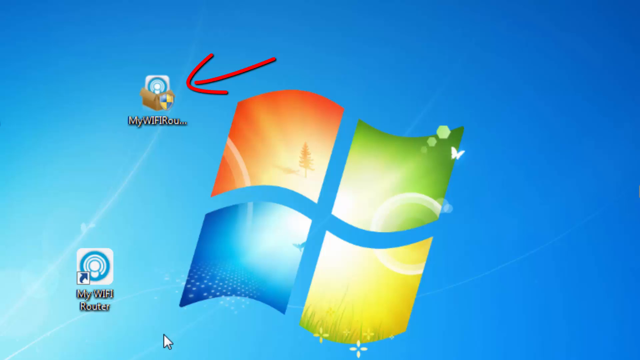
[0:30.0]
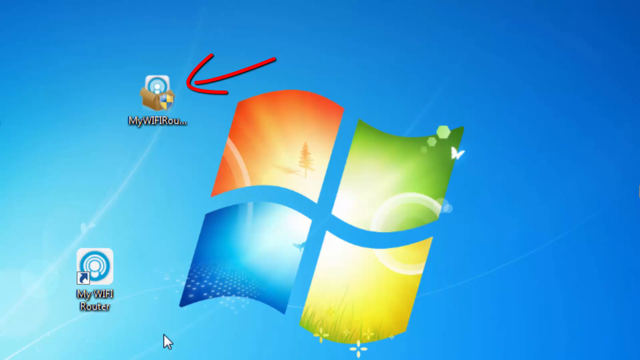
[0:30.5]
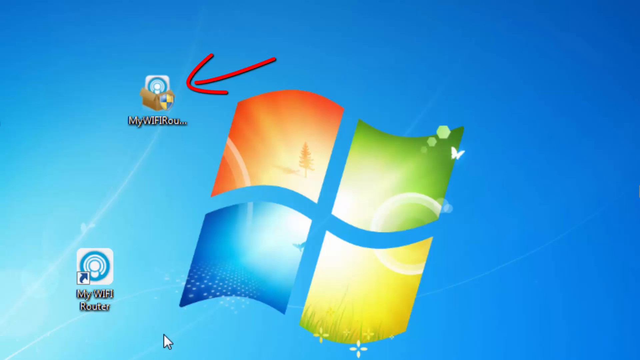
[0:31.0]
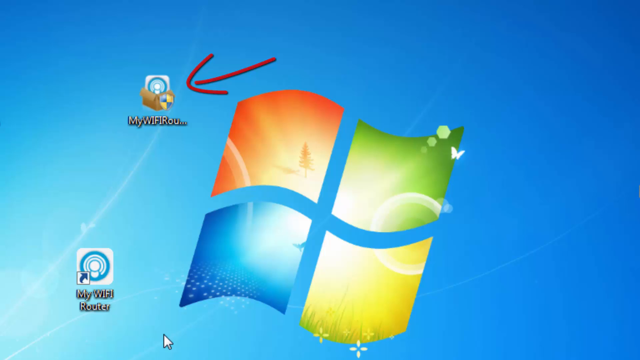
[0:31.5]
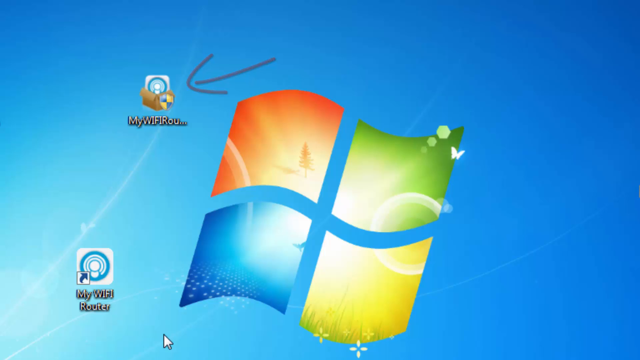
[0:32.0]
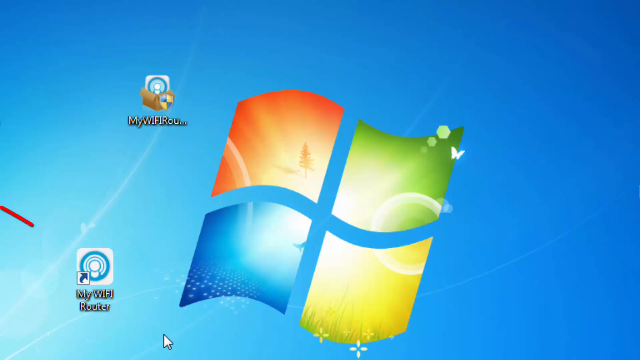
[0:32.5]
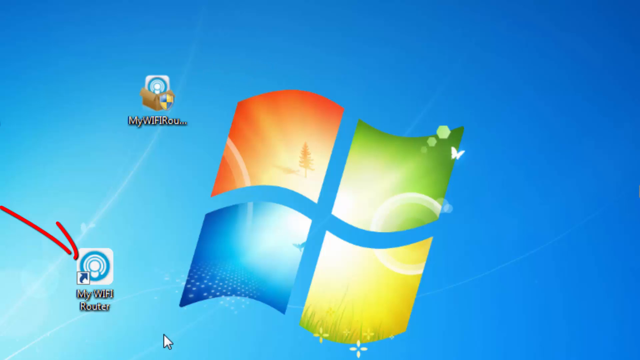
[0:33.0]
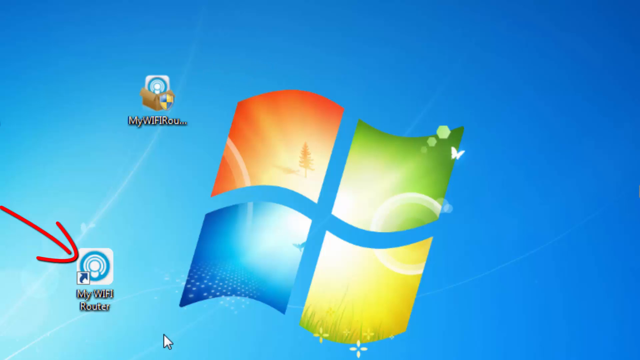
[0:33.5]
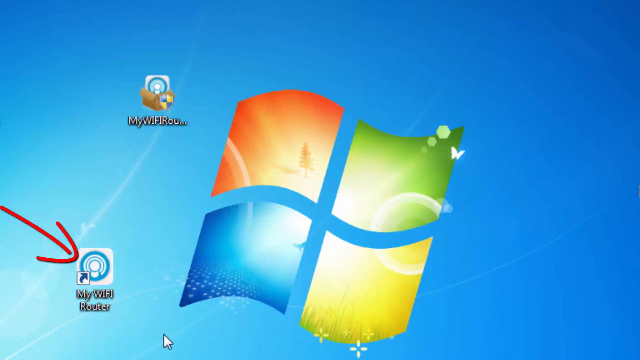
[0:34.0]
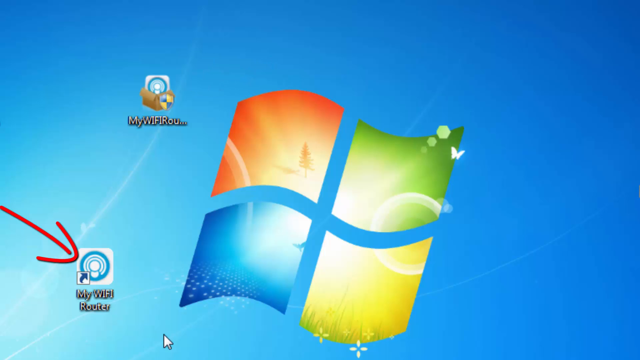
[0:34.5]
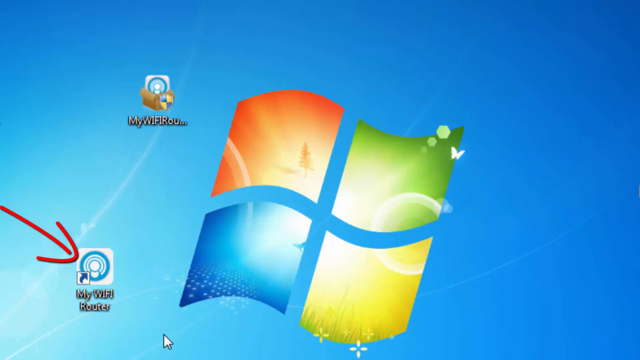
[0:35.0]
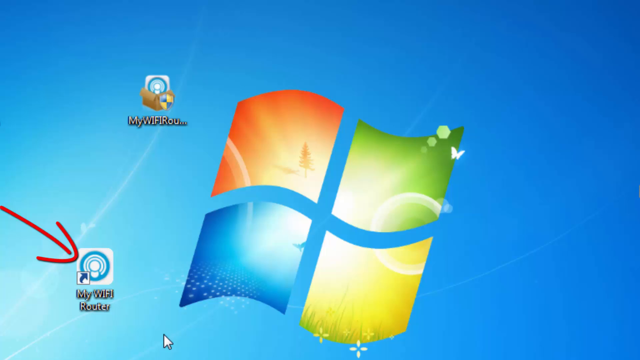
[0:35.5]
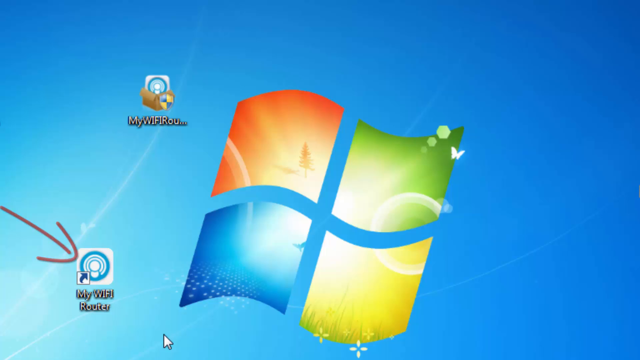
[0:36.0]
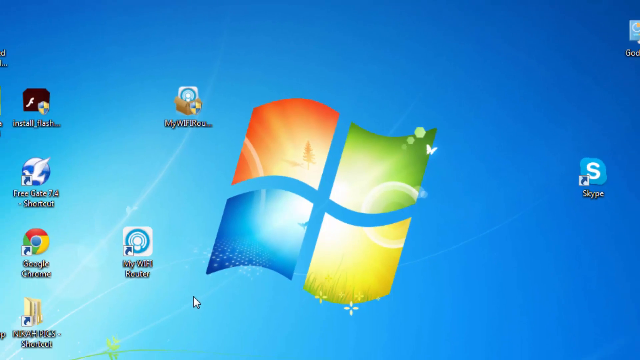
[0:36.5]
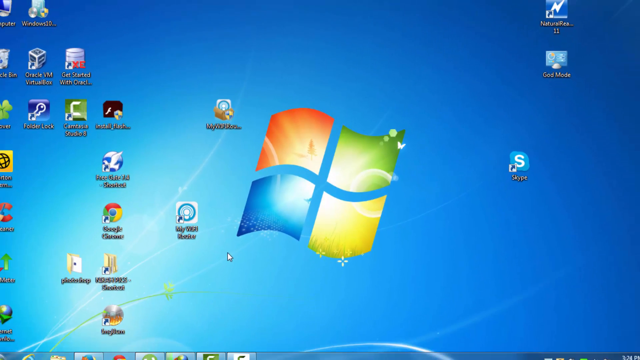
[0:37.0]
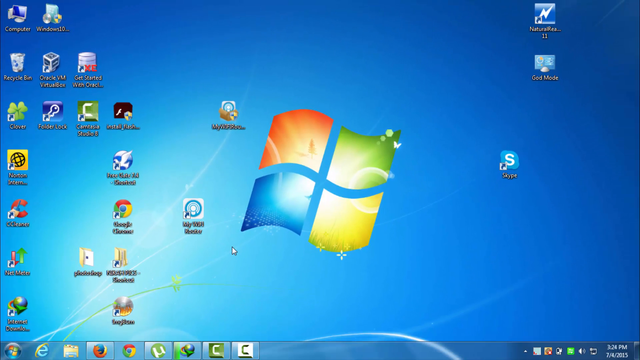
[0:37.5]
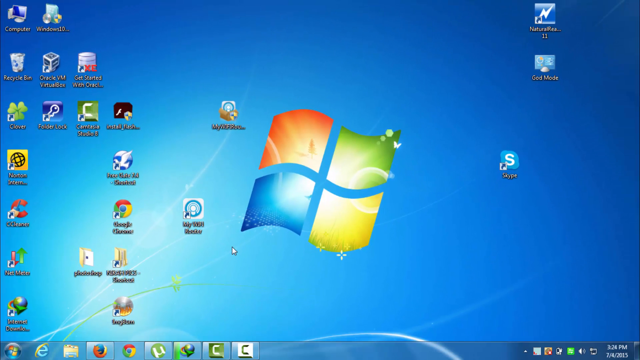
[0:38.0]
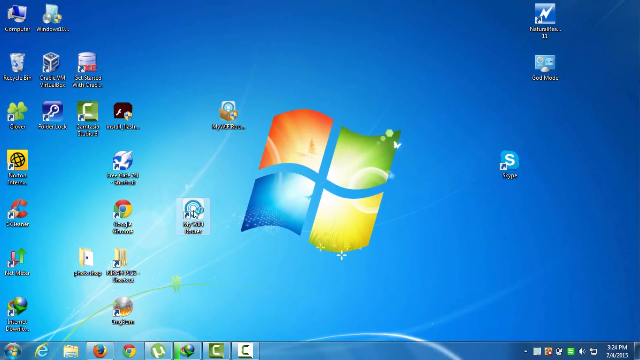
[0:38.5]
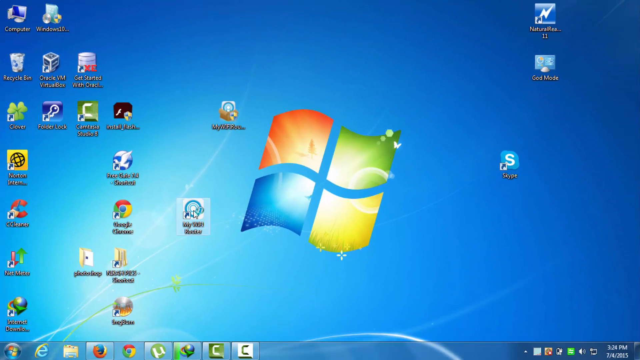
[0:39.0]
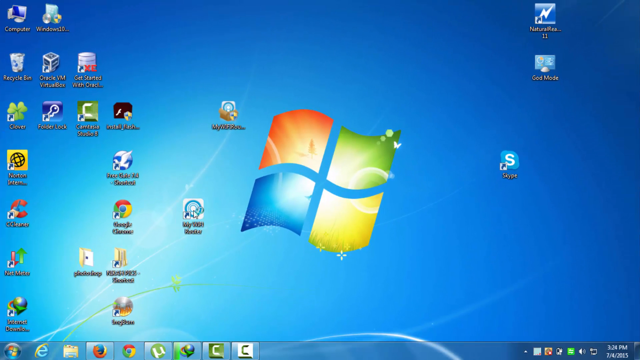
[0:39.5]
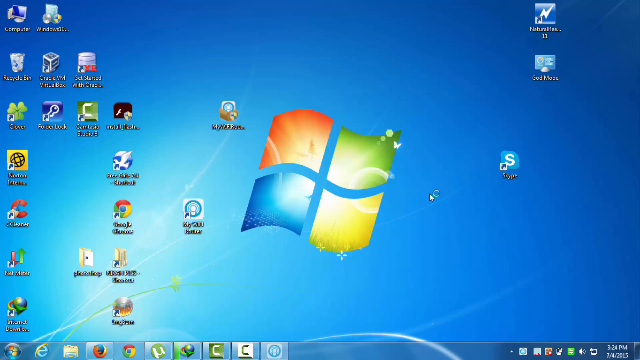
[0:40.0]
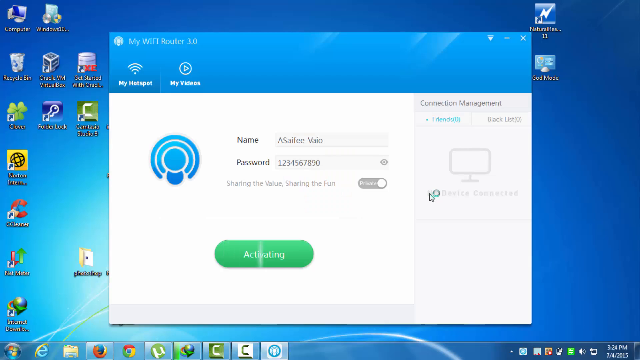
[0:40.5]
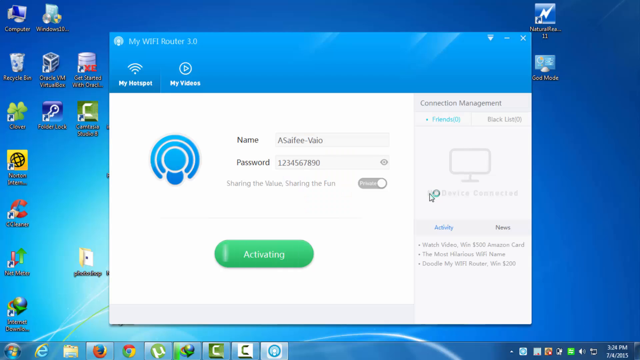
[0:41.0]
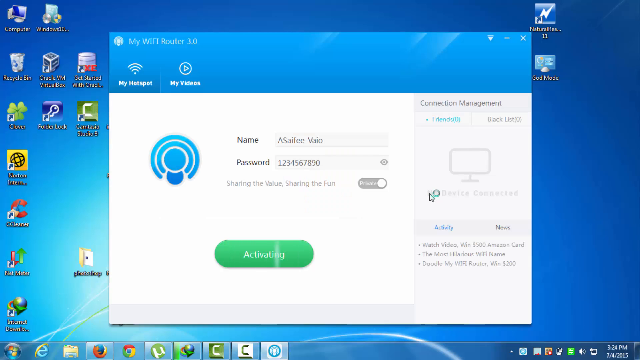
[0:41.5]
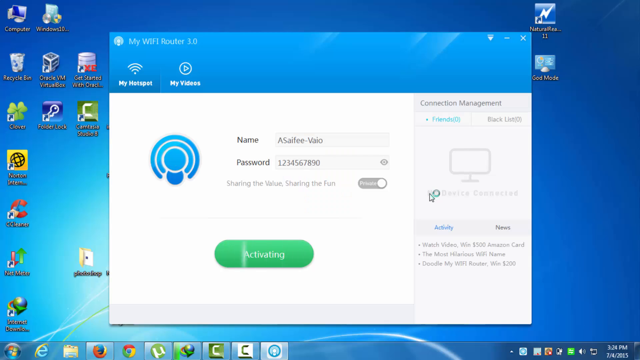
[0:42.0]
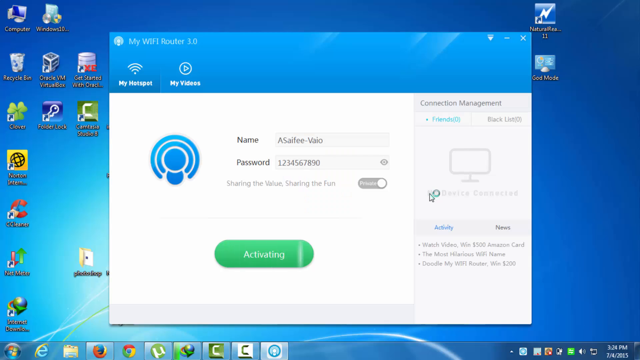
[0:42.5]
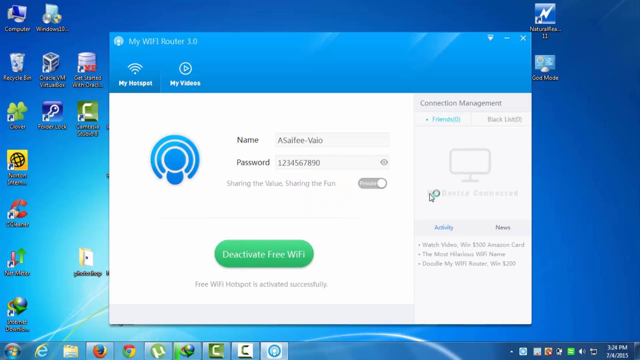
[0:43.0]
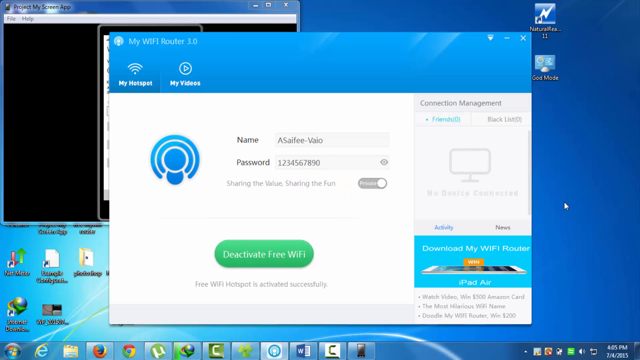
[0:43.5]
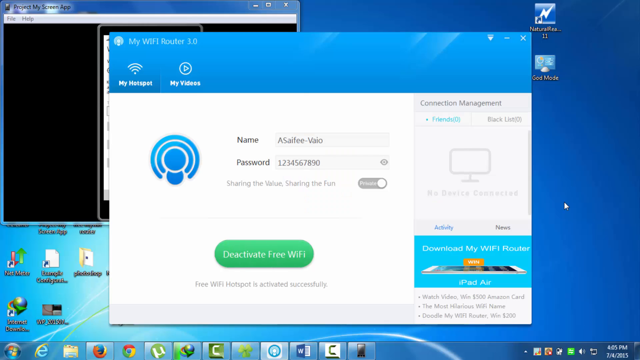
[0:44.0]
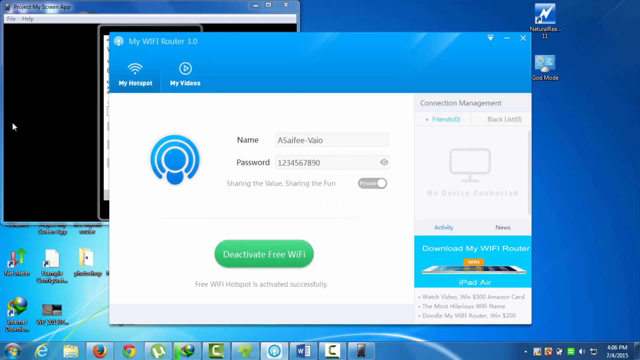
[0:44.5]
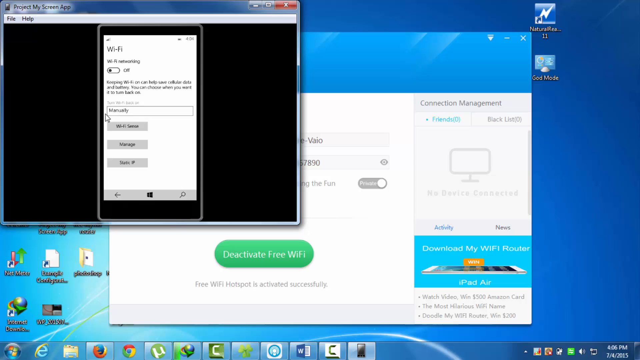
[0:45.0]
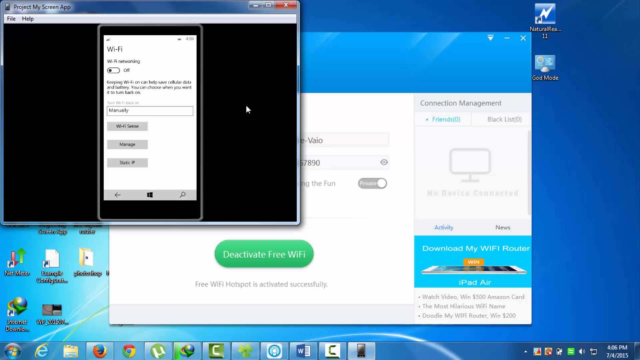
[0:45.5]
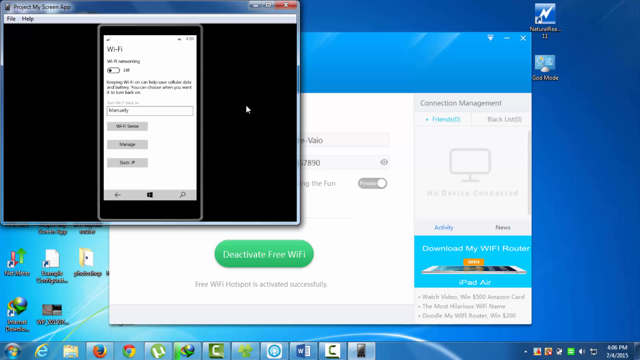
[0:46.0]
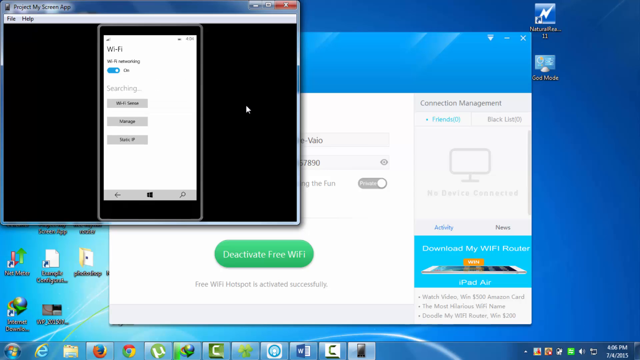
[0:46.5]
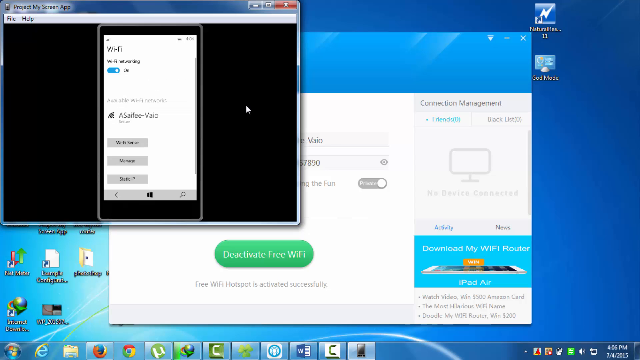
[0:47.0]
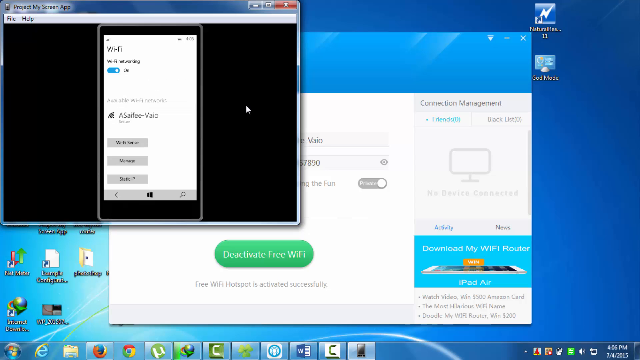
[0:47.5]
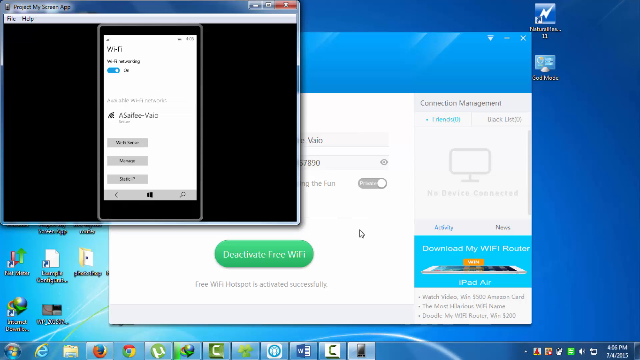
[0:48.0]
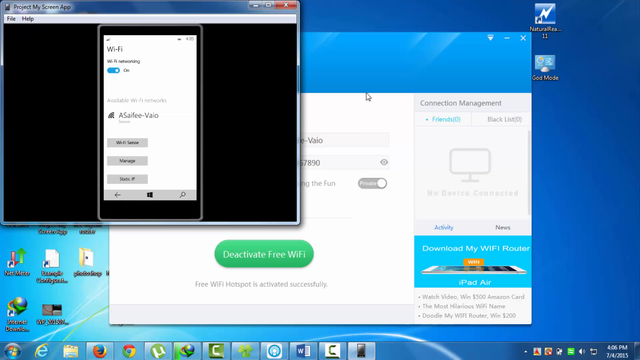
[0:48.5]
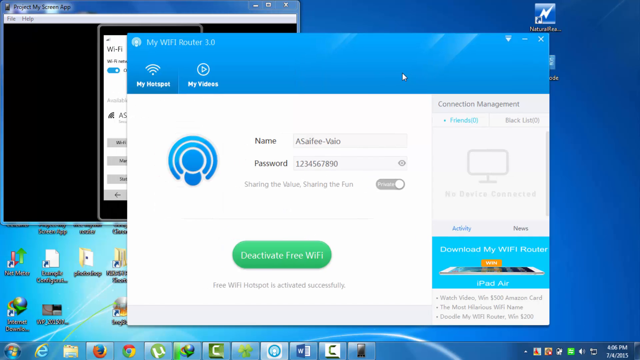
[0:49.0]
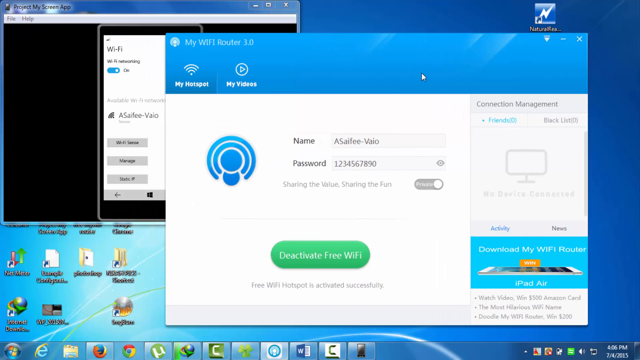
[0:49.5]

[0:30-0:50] The My Wi-Fi Router application icon is on the laptop's desktop, and the application is opened on the laptop. The video then depicts the same application being downloaded on a phone, so the software is on both the laptop and the phone.